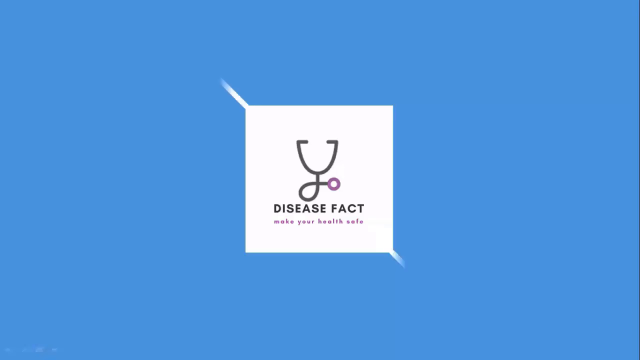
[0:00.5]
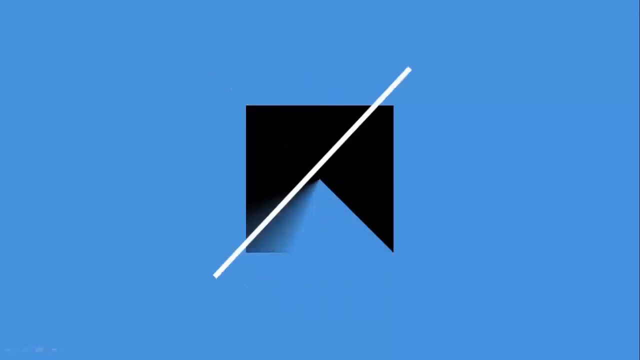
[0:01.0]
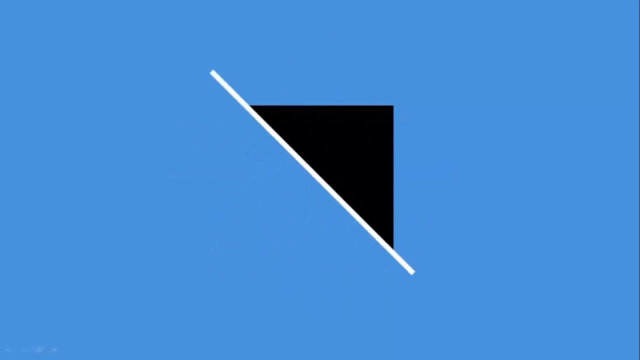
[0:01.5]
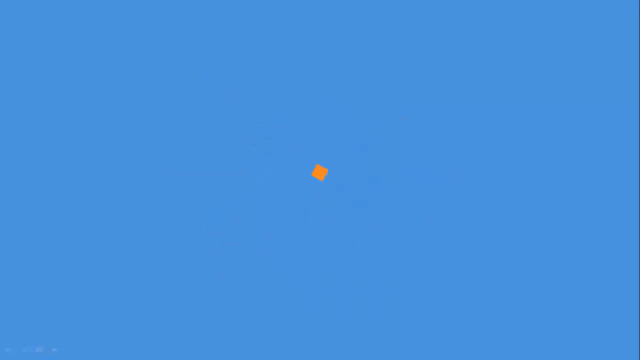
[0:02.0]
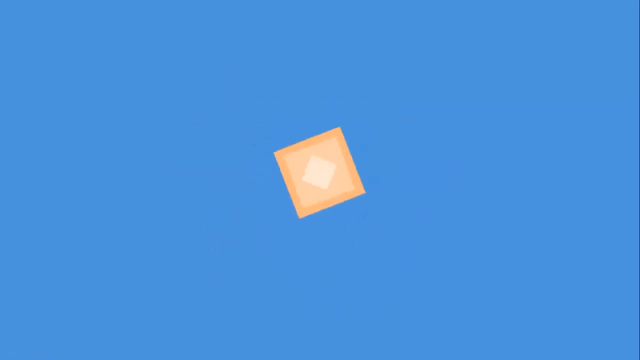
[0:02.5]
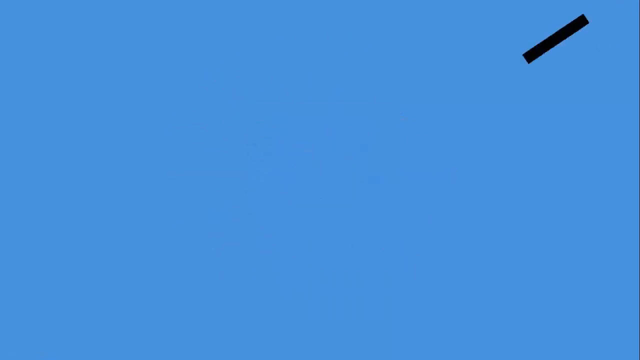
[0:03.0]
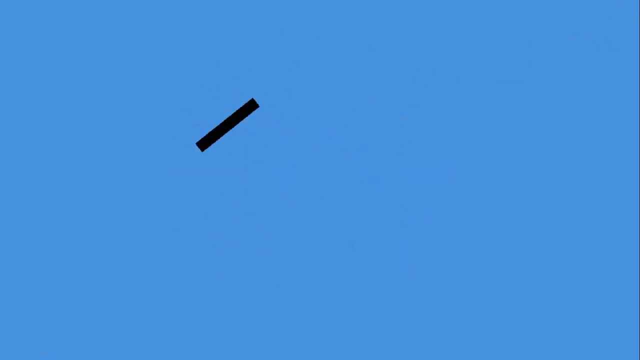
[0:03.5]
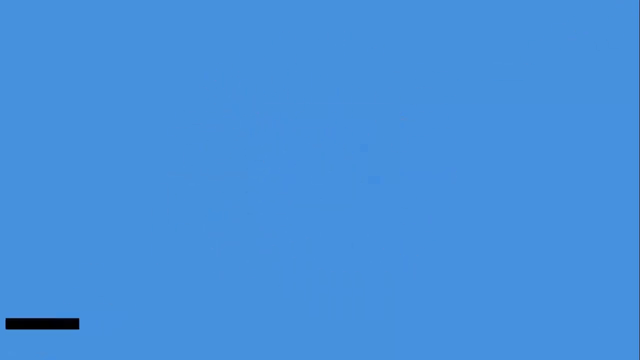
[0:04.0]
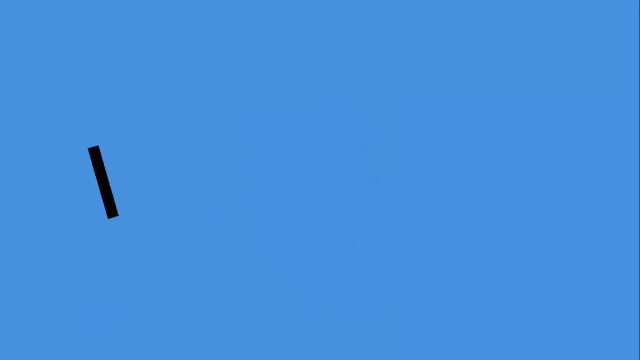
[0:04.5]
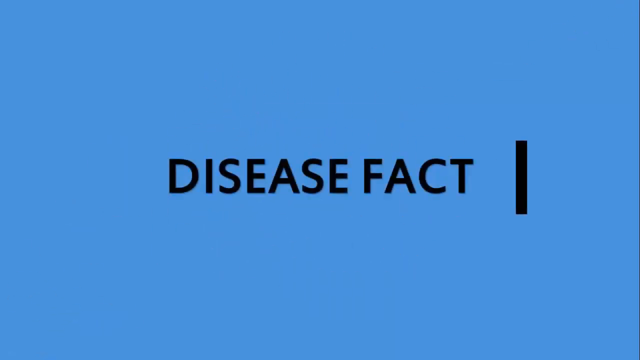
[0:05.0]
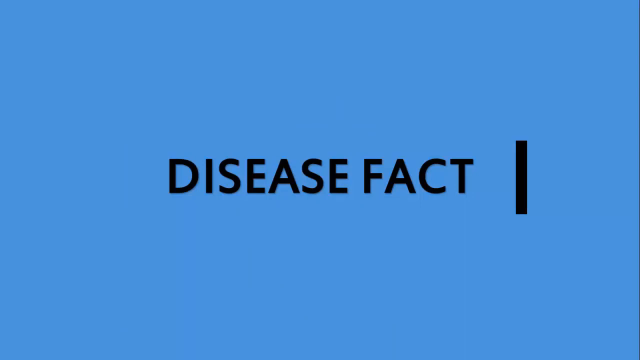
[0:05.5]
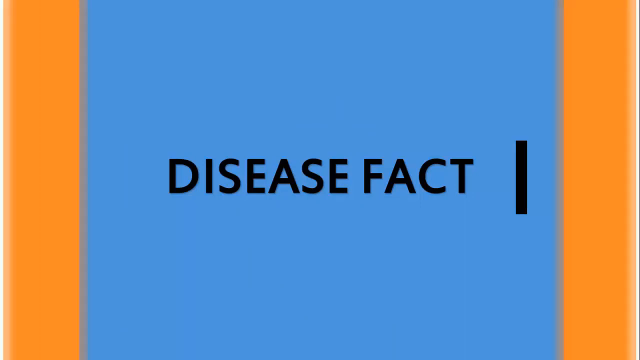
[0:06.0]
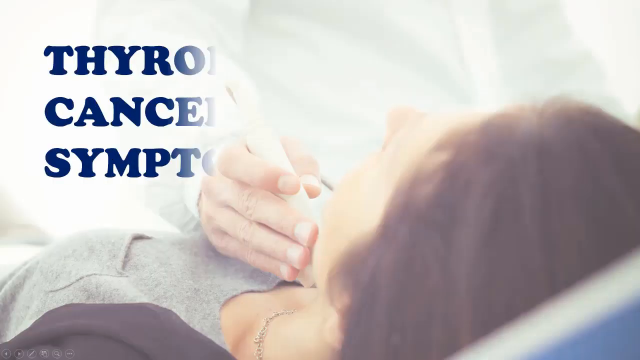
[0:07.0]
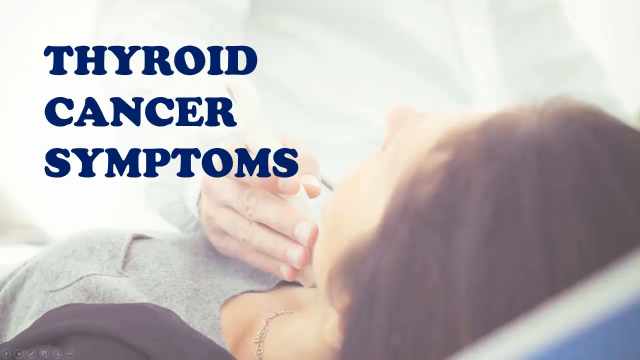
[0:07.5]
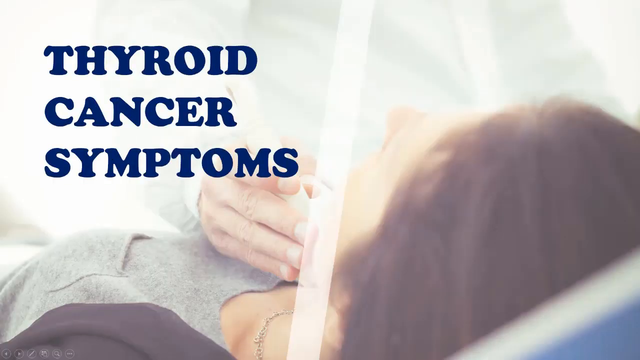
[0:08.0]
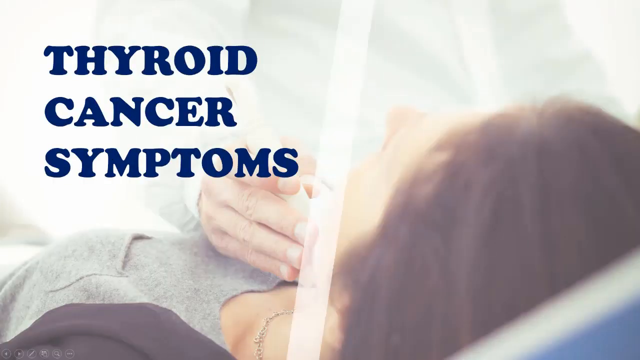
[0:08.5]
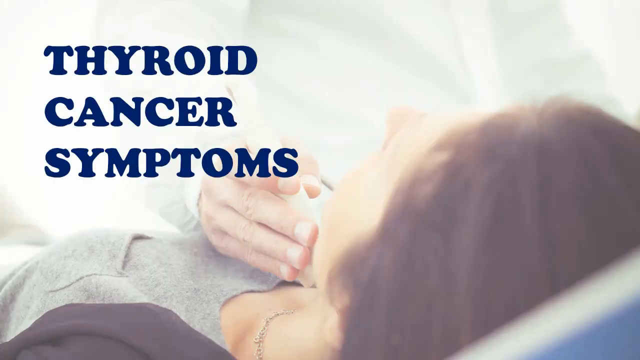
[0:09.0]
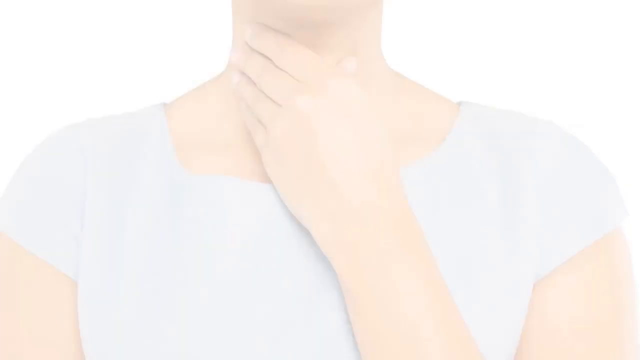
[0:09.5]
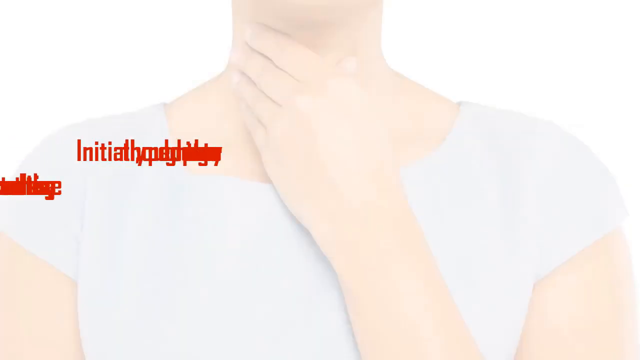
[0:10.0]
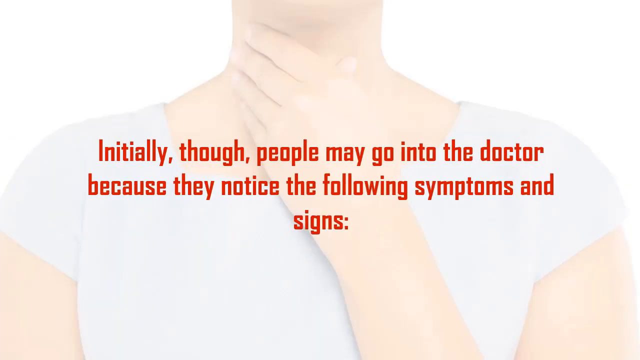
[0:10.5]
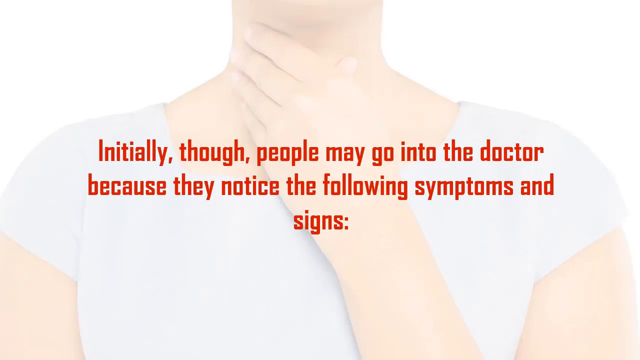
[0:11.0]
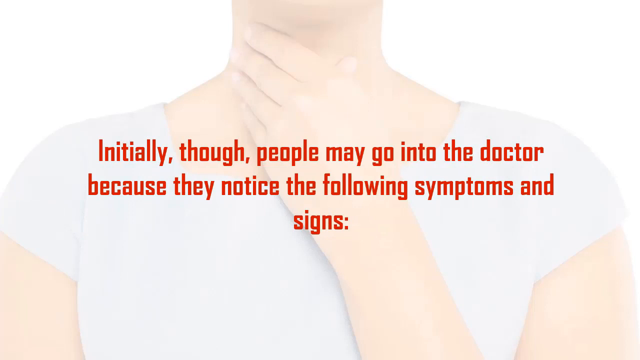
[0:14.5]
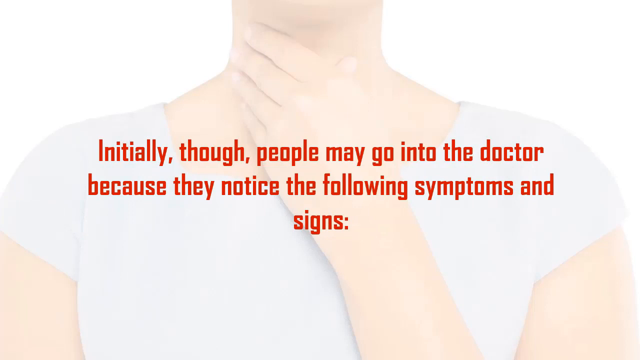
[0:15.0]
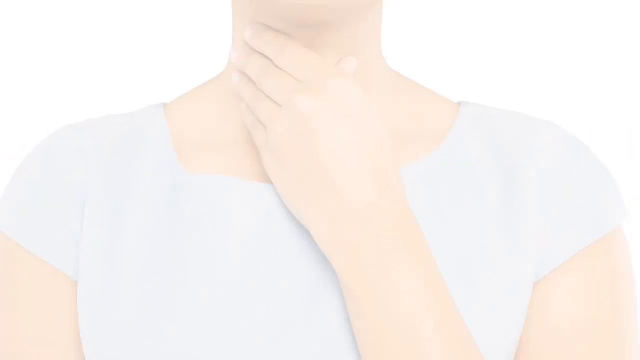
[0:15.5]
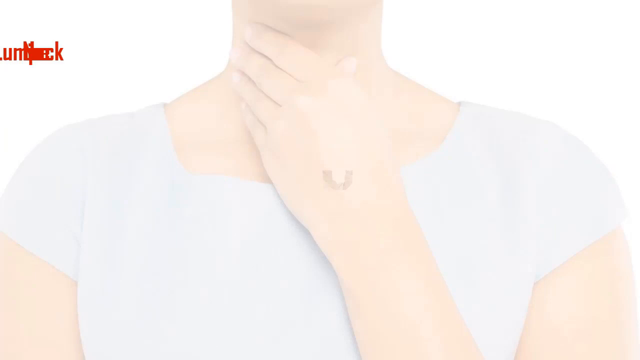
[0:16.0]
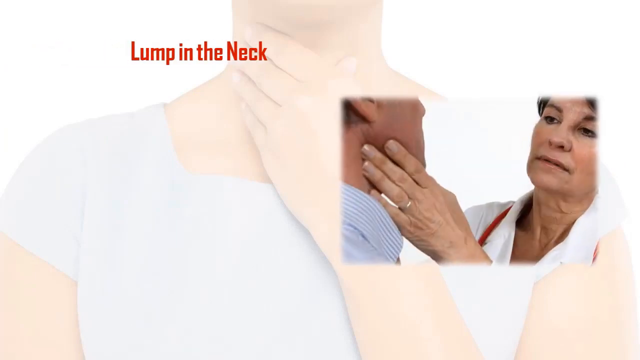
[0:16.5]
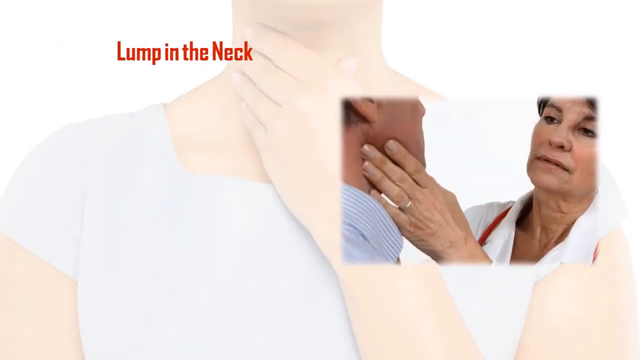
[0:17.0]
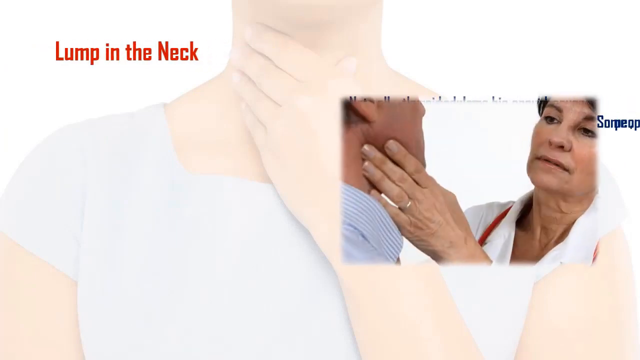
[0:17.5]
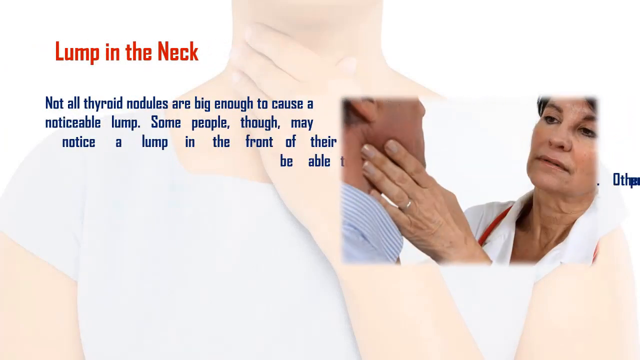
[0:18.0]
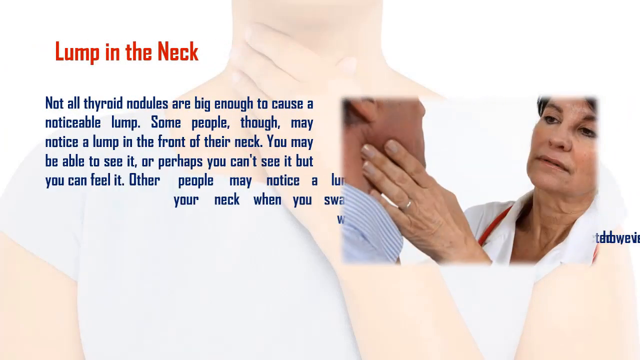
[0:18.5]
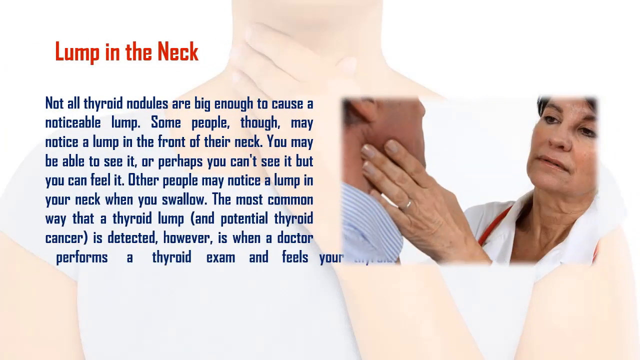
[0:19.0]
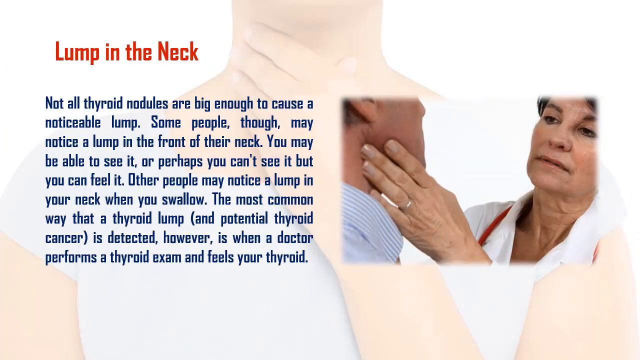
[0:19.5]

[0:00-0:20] The video is titled "disease facts," and this one is called "thyroid cancer symptoms," written in dark navy blue. The slide shows a lady lying on a bed with brown hair, wearing what seems to be a gray tank top or a shirt with a pocket; she is touching her neck with her right hand. The next screen reads, in red, "initially though" and "people may go to the doctor because they notice the following symptoms and signs." The picture behind these words shows just her neck and upper body, with her left hand touching the side of her neck. The following slide reads "lump in the neck" in red and has a picture of a female doctor touching the right side of a man's neck with her left hand. The man is white, with short, probably brown hair, and wears a very faintly striped blue and white dress shirt; the rest of his face is cut off. The doctor is a woman, probably in her early 60s, with brown hair, and it is not visible whether it is short or pulled back; she looks Italian. A block of text follows on the slide.